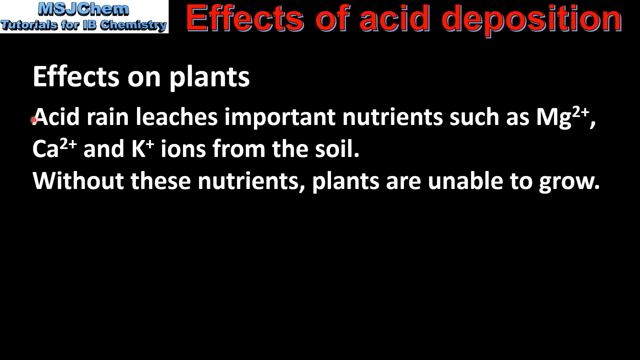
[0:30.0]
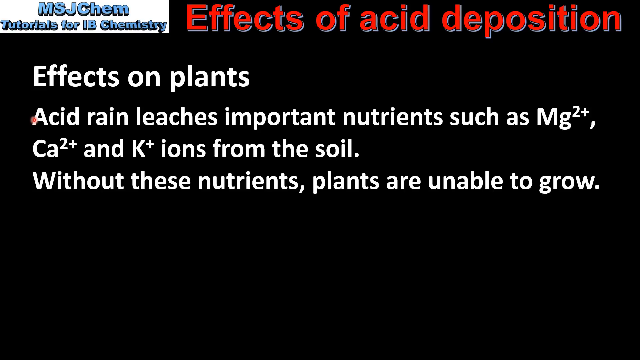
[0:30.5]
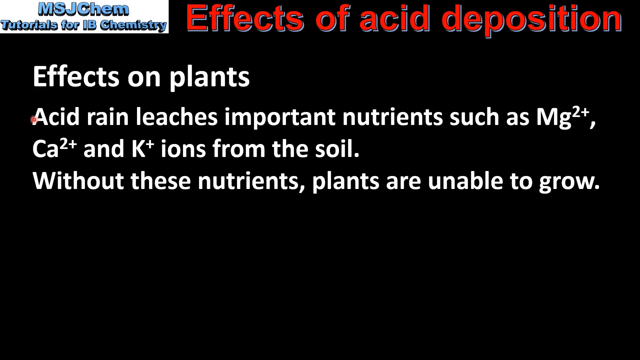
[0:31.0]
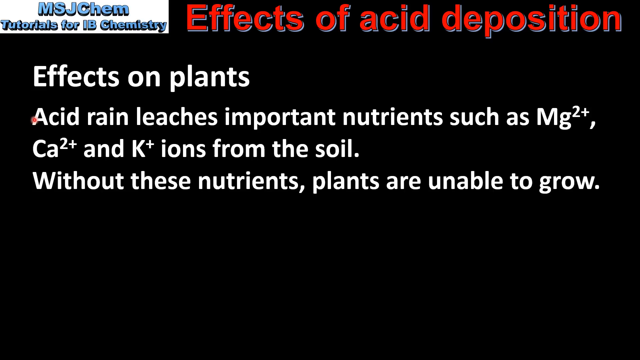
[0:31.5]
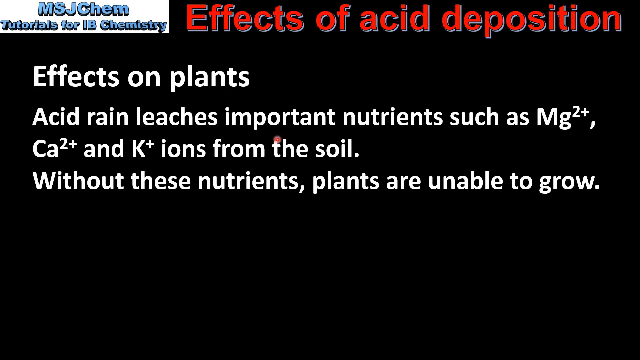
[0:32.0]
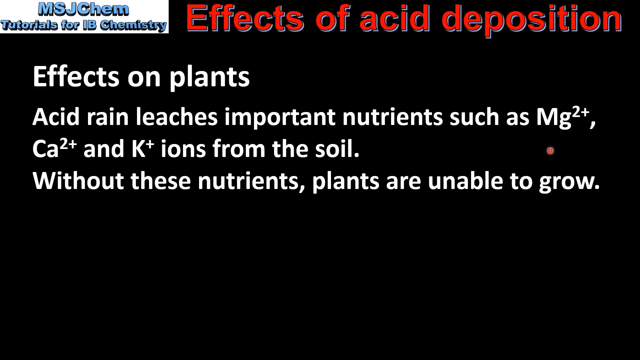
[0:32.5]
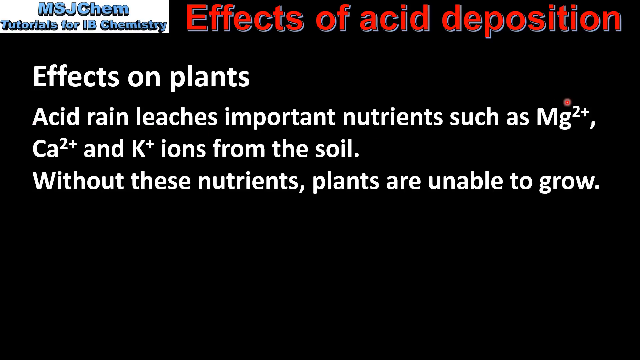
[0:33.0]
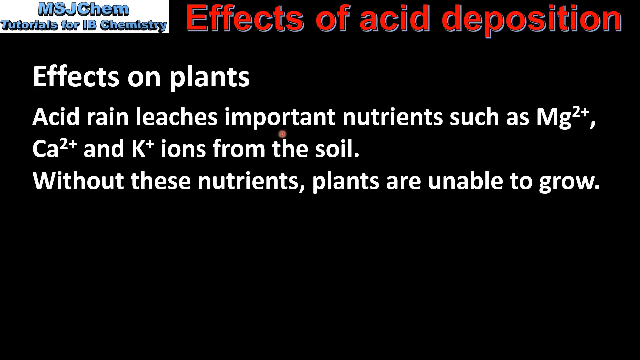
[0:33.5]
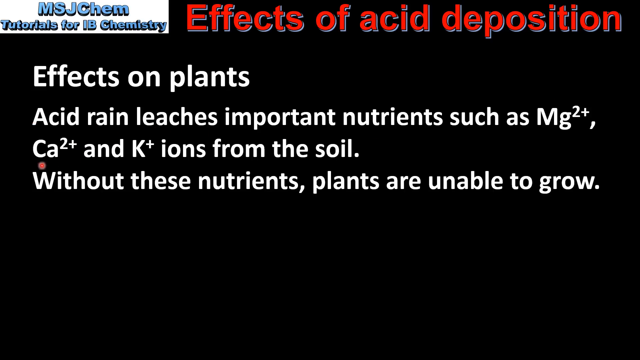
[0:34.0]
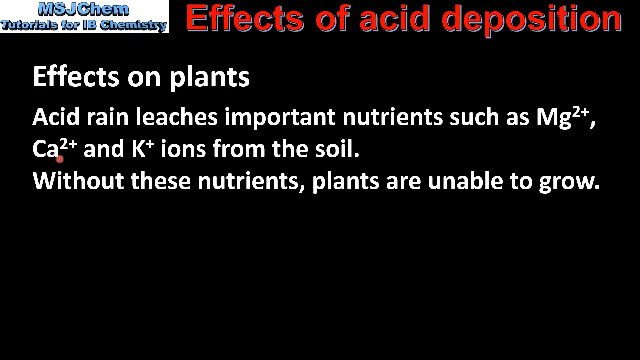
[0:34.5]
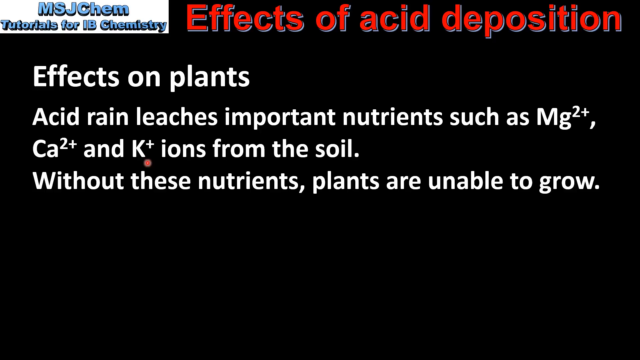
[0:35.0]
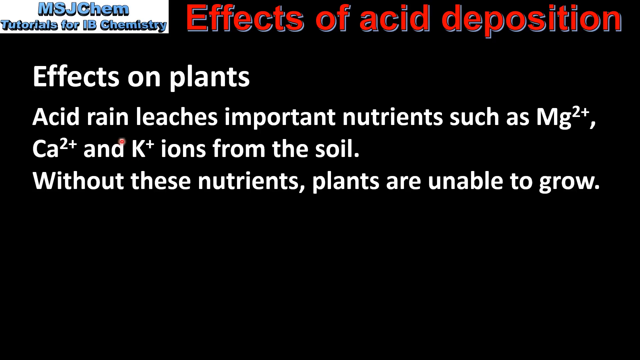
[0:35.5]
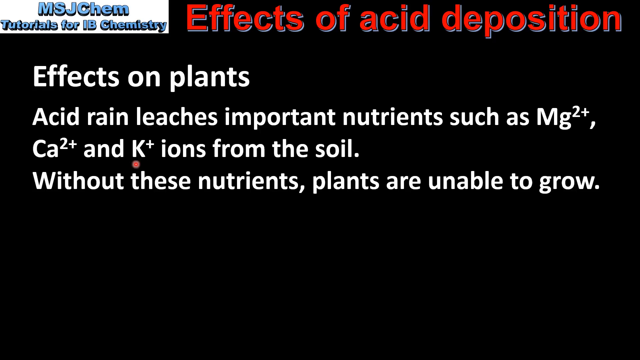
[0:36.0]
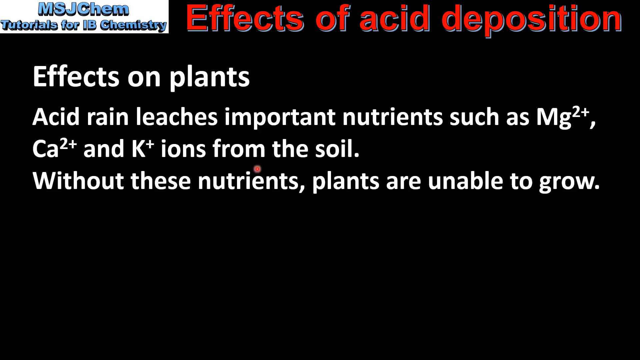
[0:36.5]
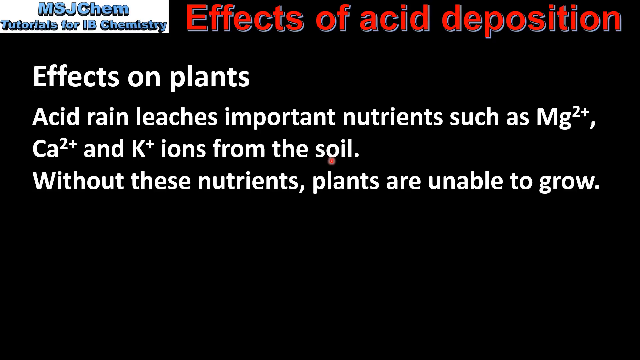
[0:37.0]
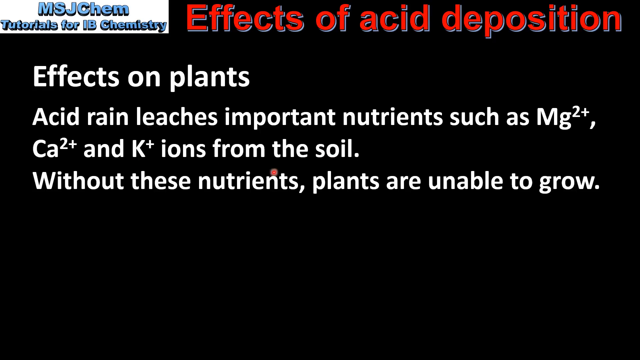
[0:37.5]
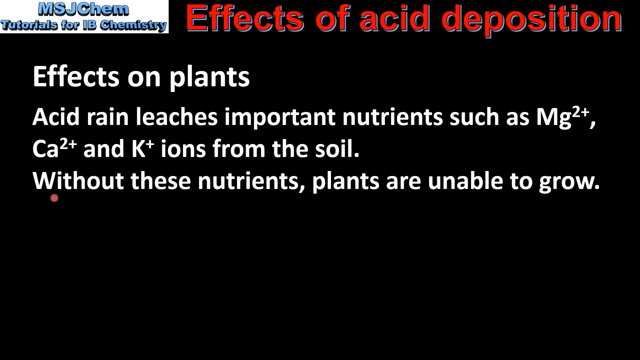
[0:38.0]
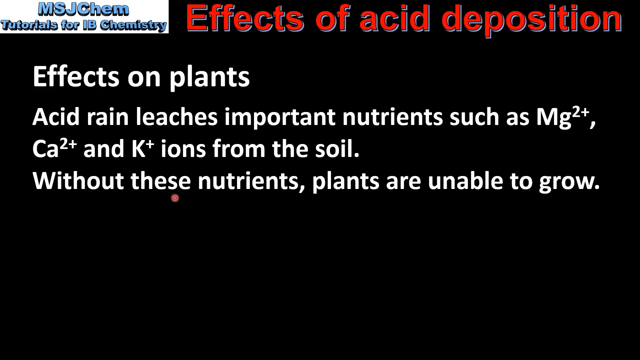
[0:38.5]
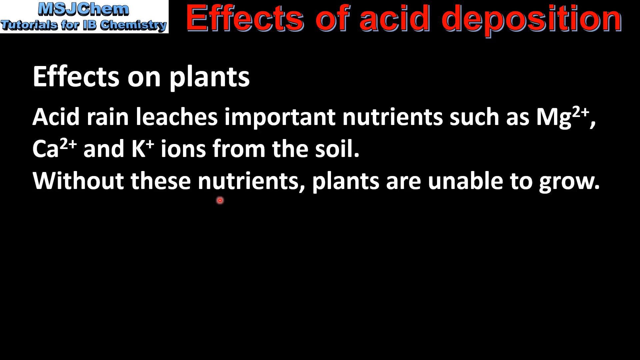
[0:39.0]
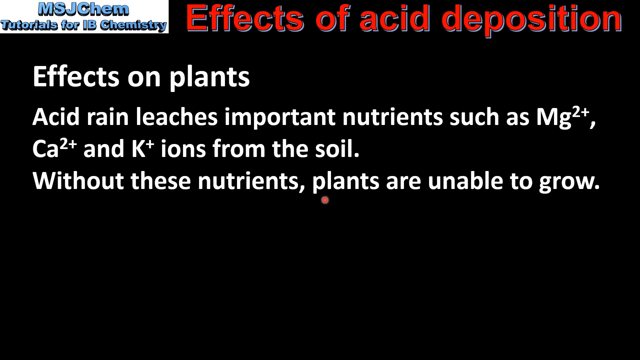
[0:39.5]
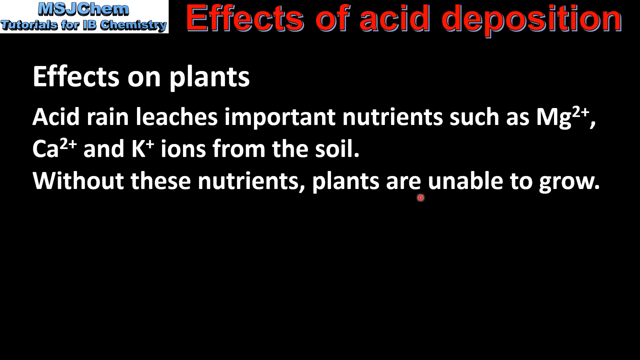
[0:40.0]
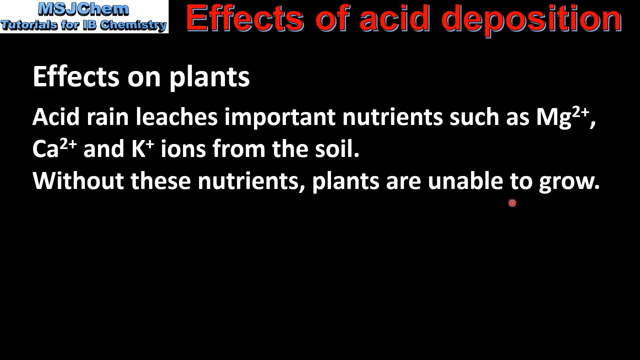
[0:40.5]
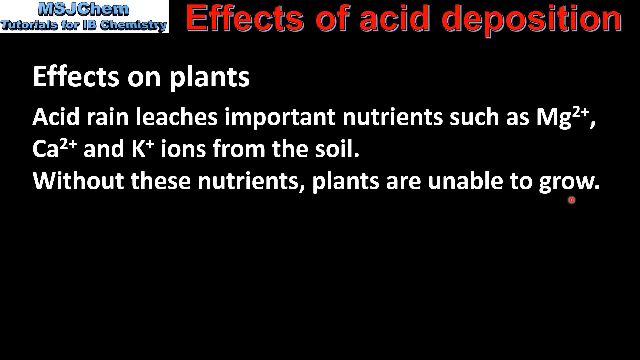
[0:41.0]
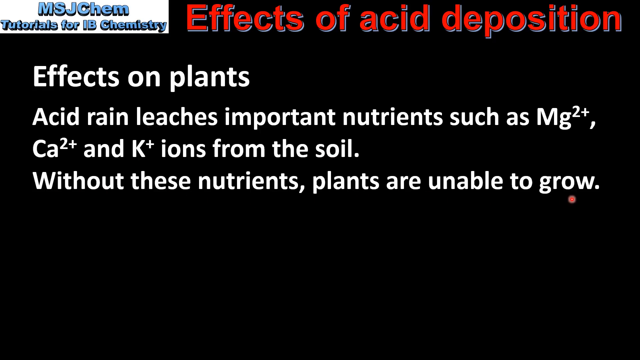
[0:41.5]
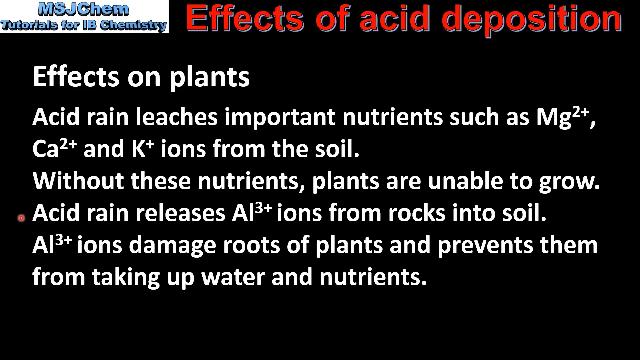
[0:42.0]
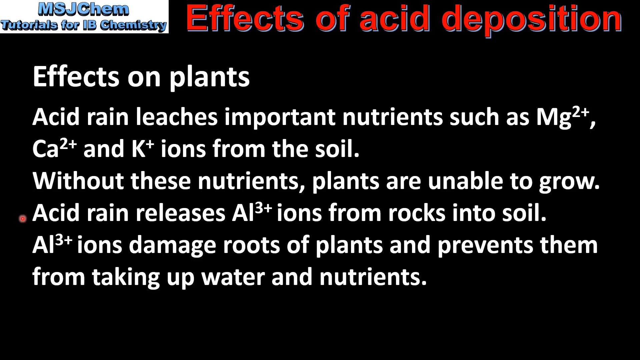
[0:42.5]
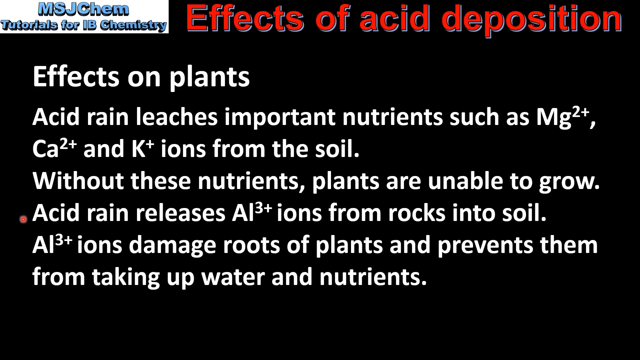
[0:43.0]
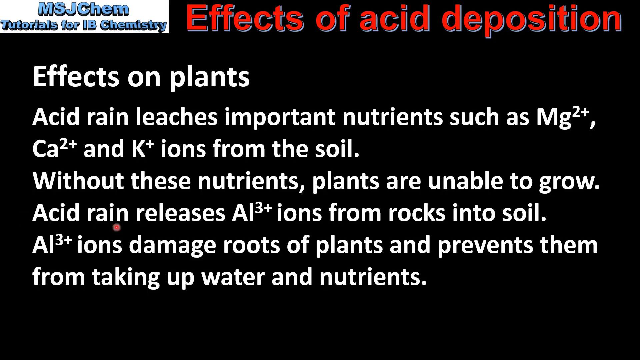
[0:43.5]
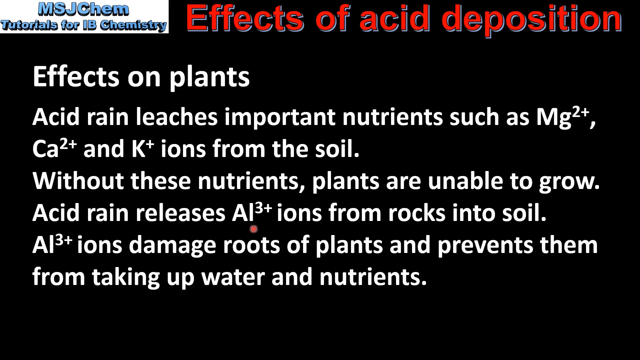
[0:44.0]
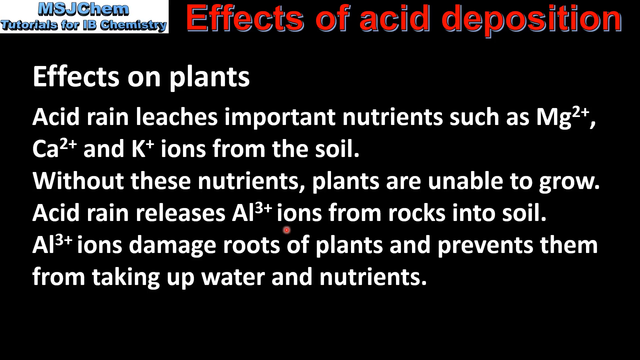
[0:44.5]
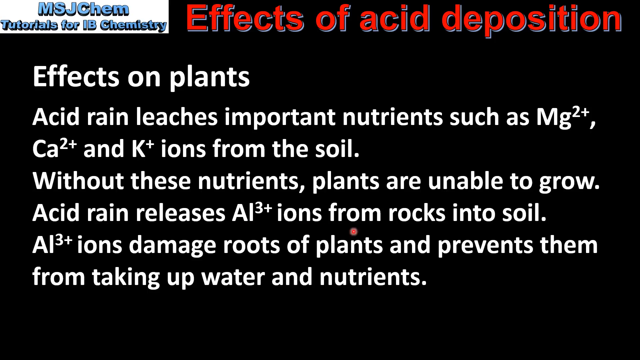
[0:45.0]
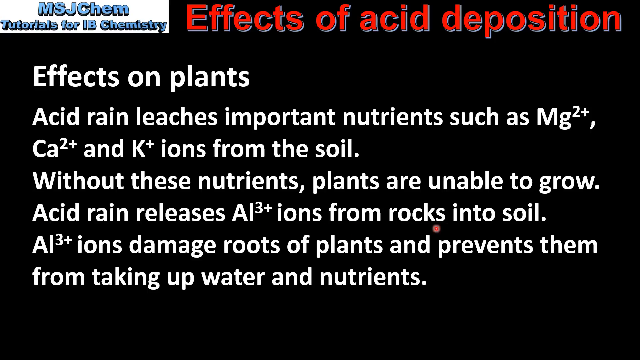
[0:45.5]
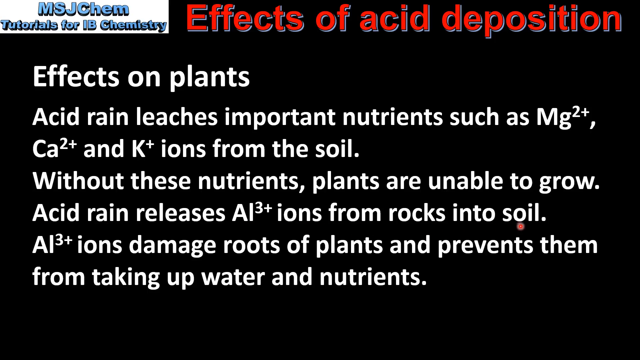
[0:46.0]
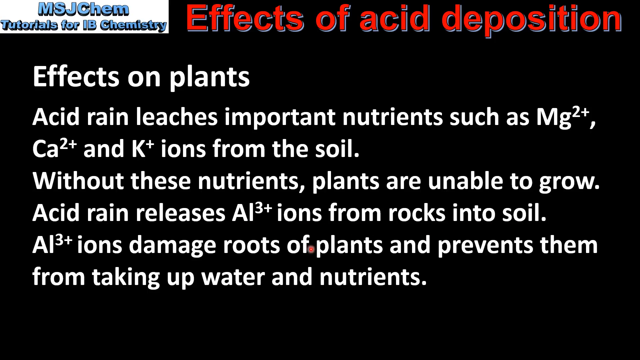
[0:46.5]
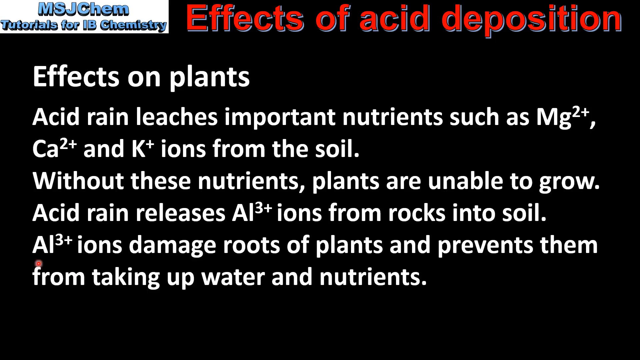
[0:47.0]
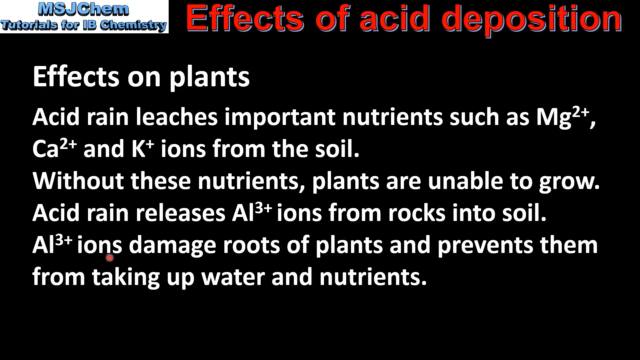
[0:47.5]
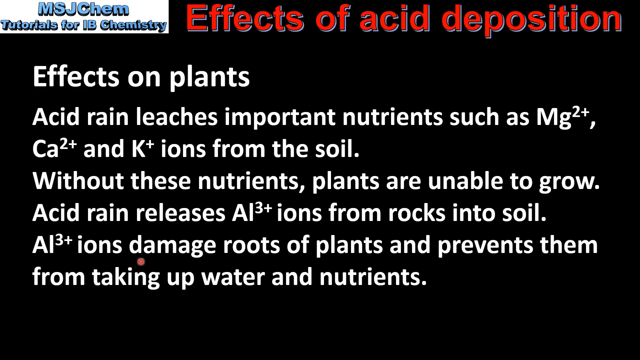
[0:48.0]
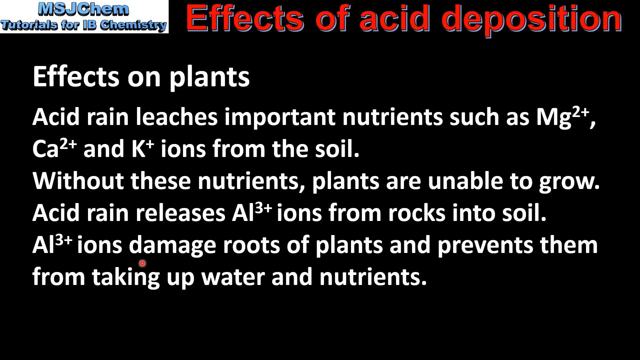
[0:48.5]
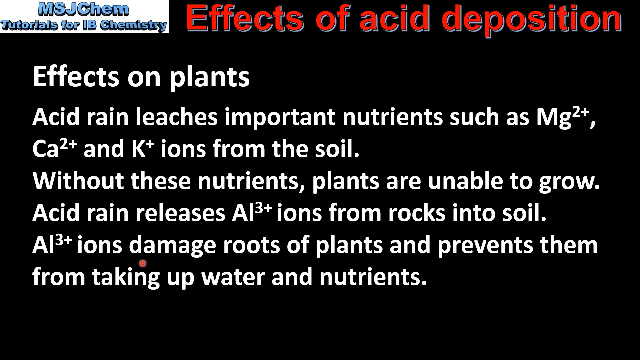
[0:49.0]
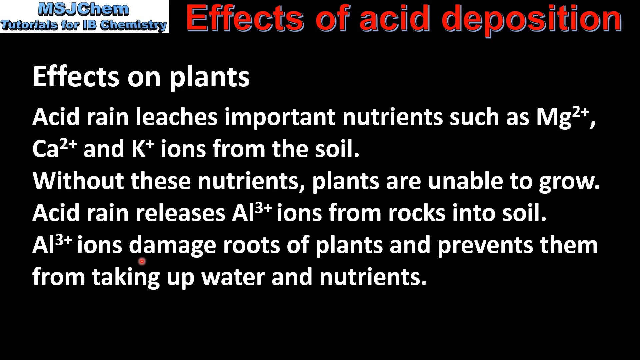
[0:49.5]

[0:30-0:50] The next slide keeps the same art style, with the top header in red reading "effects of acid deposition." The body text is white on the same black background. It reads "effects on plants" and "acid rain leaches important nutrients such as Mg2+, Ca2+, and K+ ions from the soil. Without these nutrients, plants are unable to grow." The presenter moves the cursor around the text as if reading it and using the cursor to keep their place. Another bullet point appears: "acid rain releases AI3+ ions from rocks into soil. AI3+ ions damage roots of plants and prevents them from taking up water and nutrients." The presenter again moves the cursor along the words as if reading them and keeping his place, with white font over the black background.